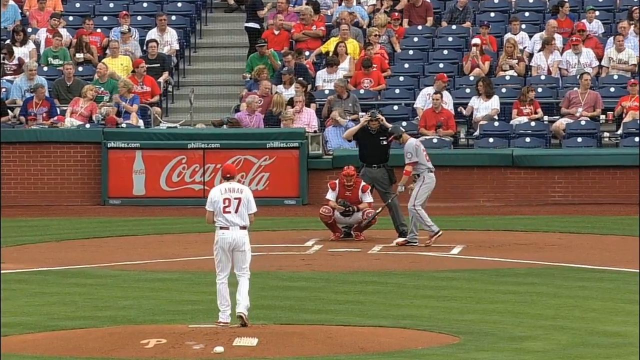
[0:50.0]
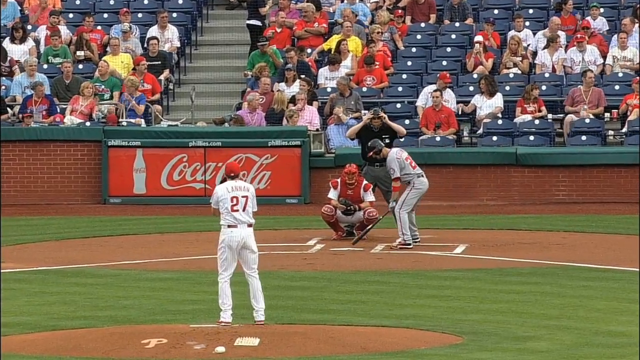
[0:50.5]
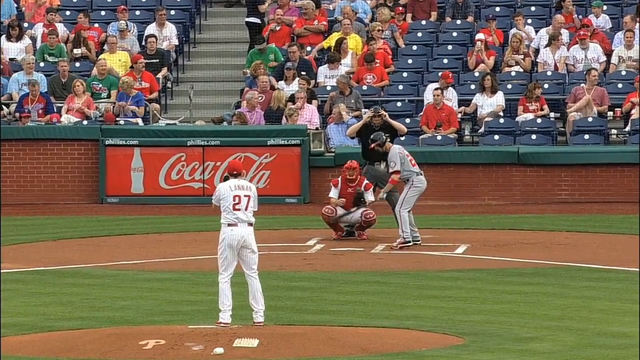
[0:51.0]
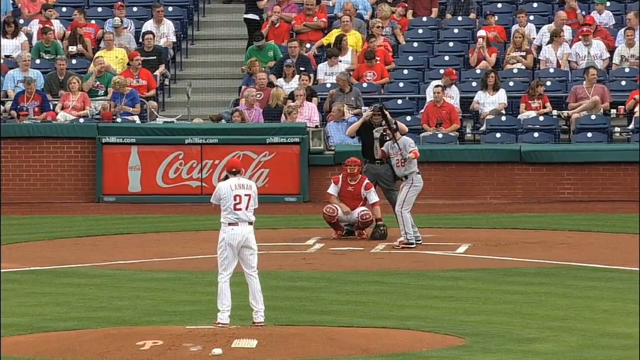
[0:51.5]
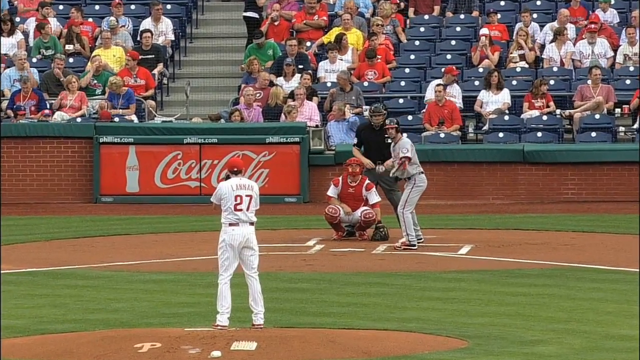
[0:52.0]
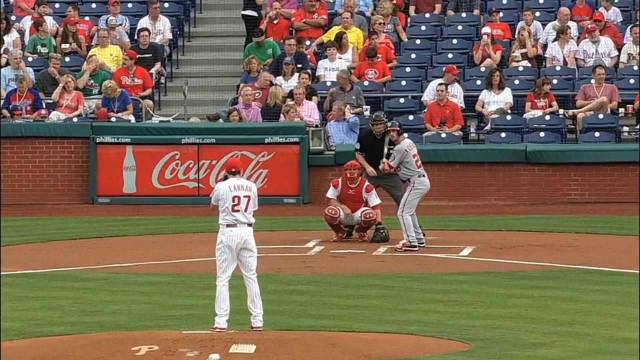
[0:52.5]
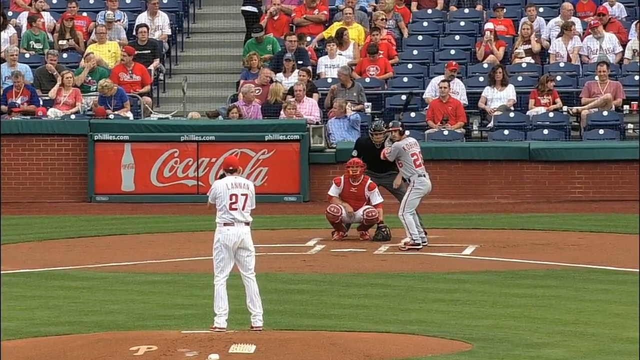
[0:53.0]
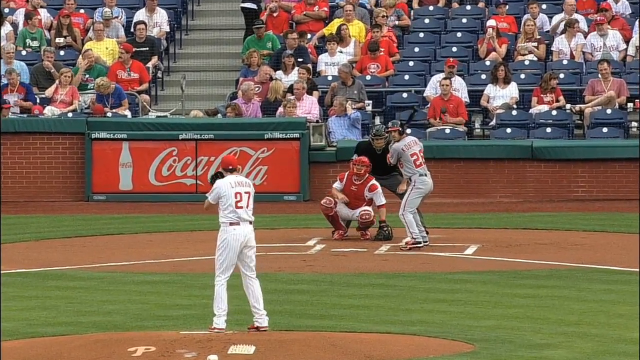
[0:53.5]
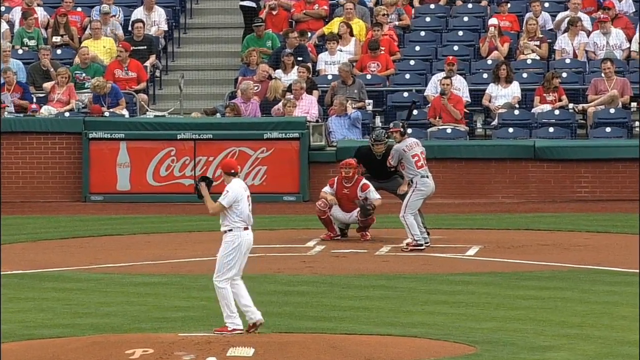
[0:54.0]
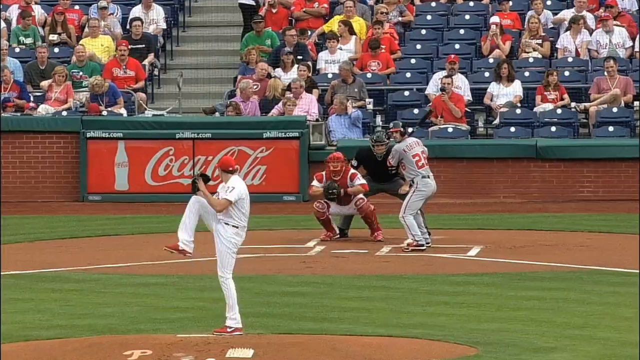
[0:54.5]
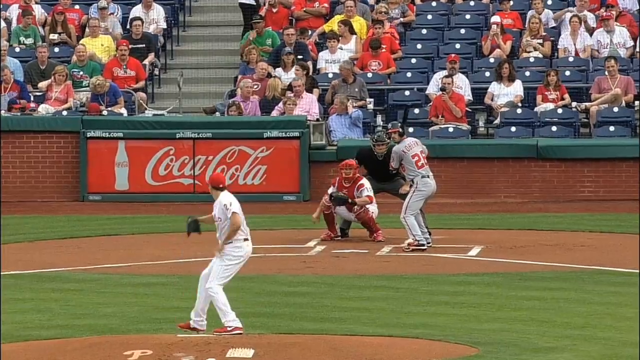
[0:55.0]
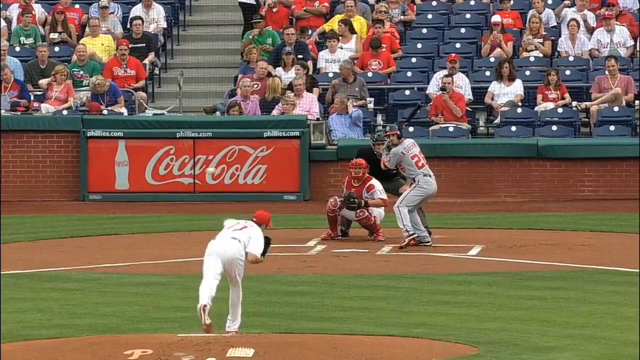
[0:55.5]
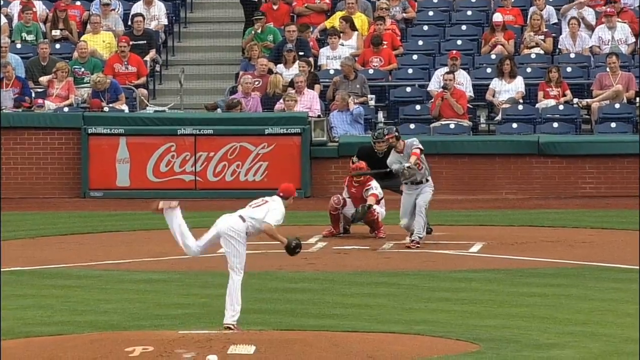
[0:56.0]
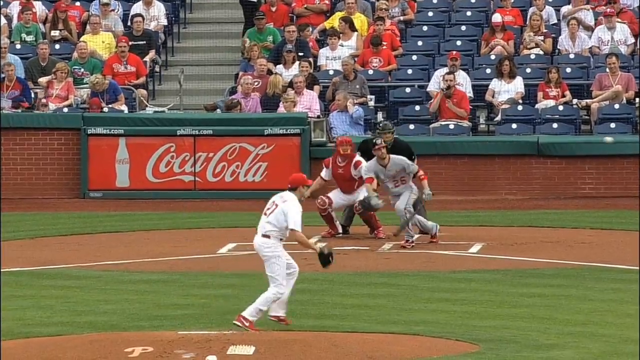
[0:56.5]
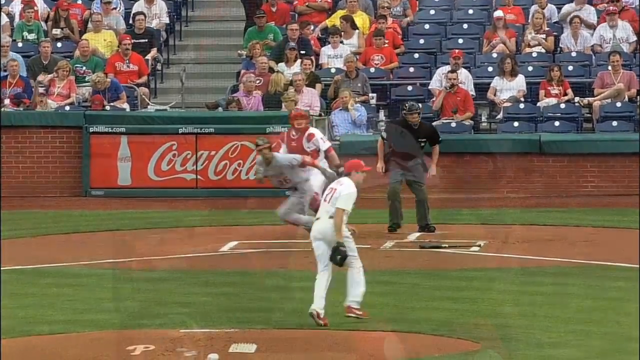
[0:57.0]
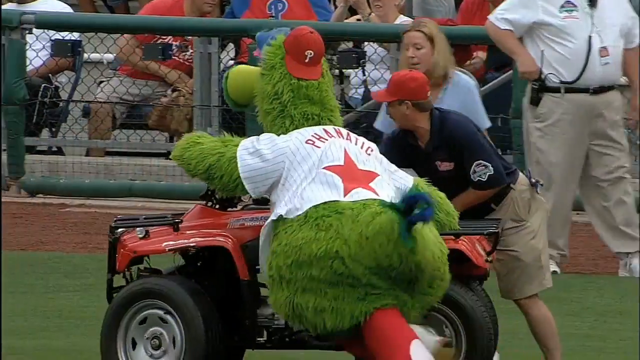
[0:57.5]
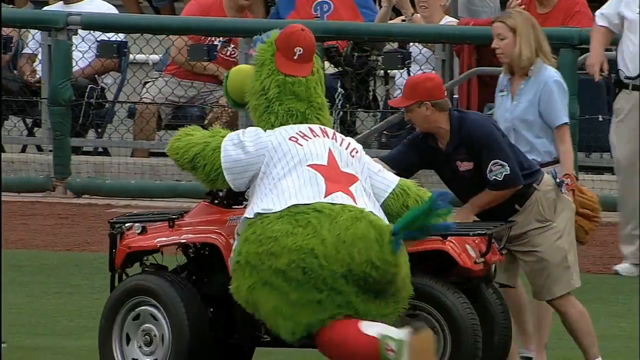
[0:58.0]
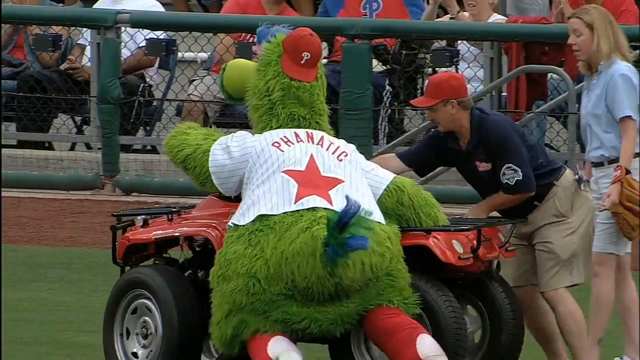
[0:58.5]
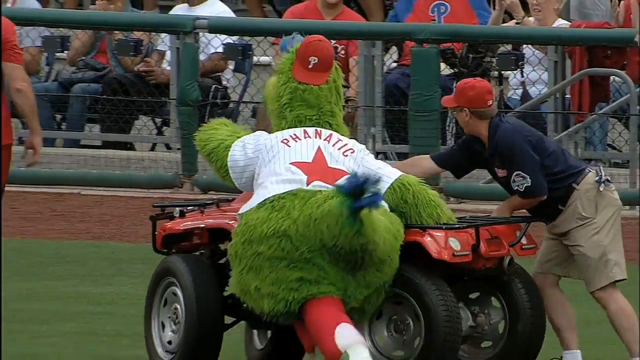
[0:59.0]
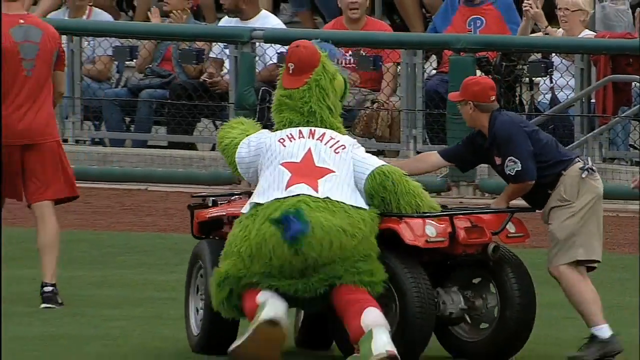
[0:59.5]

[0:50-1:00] The game has started with Washington at bat. The Washington Nationals batter, number 28, does a soft bunt and looks like he is running to first base. The video then goes back to the mascot, who is pushing the red ATV four-wheeler with another staff member to get it off the field because it is not running. His jersey says "Fanatic" in red letters at the top with a red star in the middle, apparently his name, marking him as the Phillies mascot.